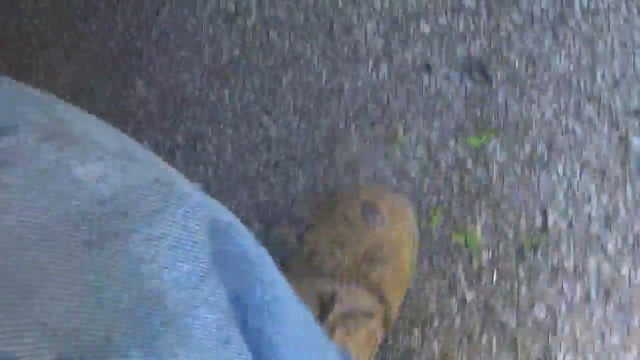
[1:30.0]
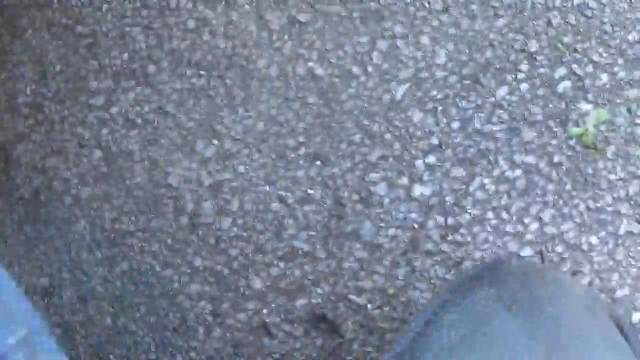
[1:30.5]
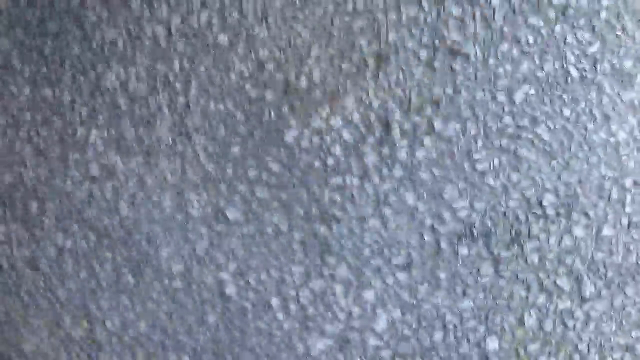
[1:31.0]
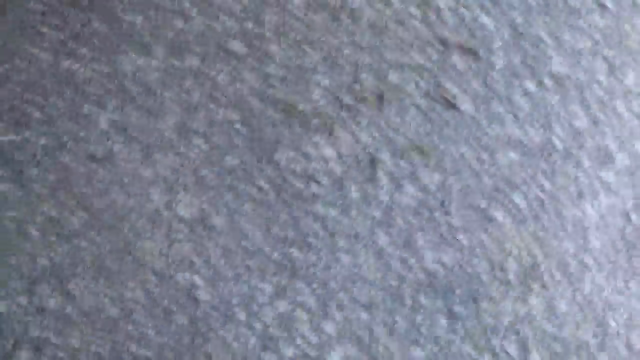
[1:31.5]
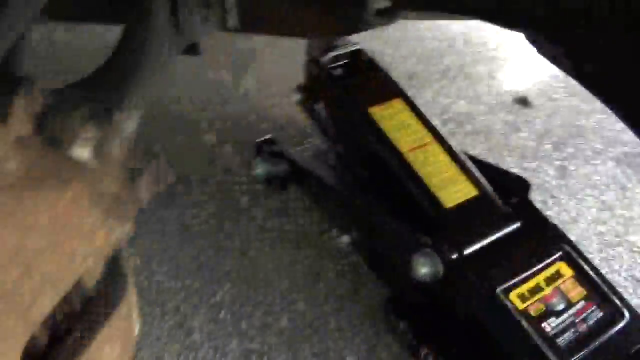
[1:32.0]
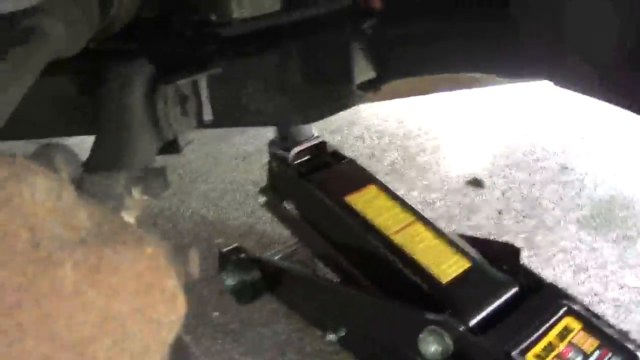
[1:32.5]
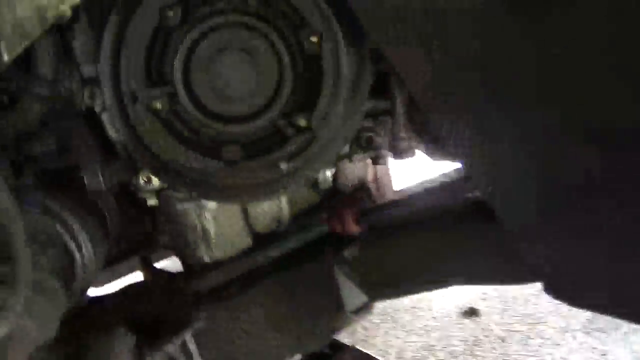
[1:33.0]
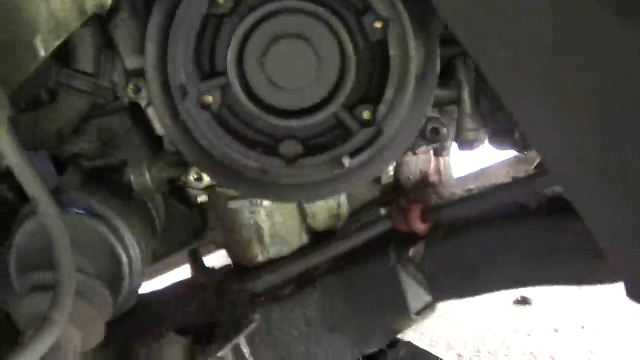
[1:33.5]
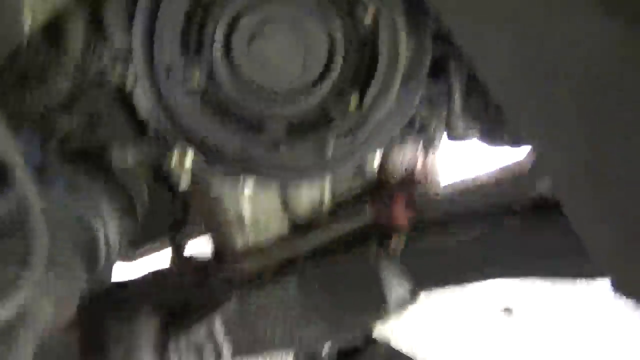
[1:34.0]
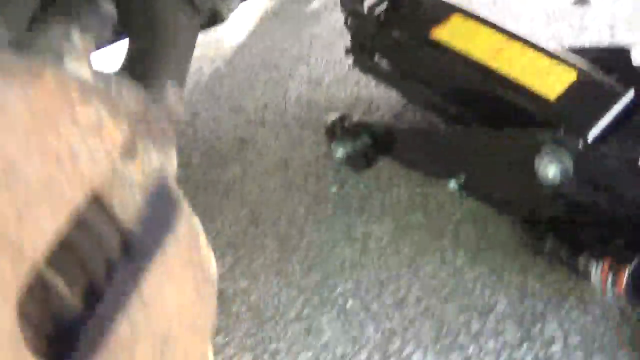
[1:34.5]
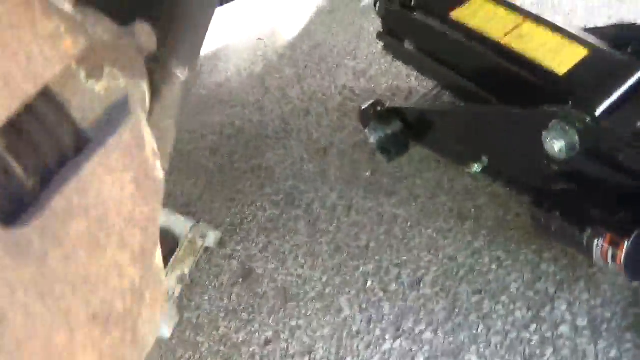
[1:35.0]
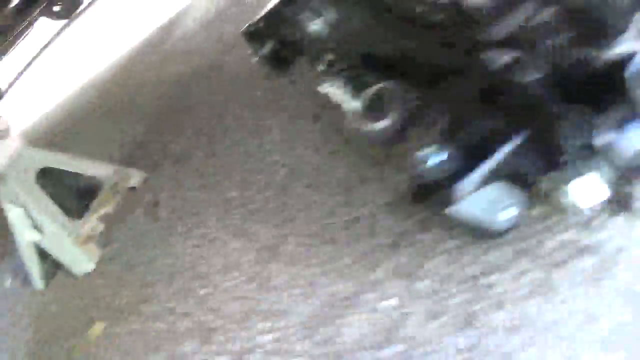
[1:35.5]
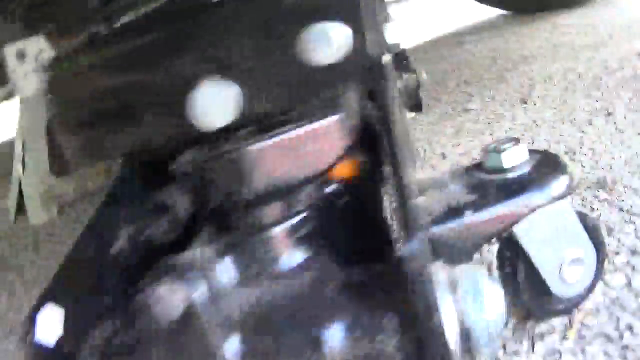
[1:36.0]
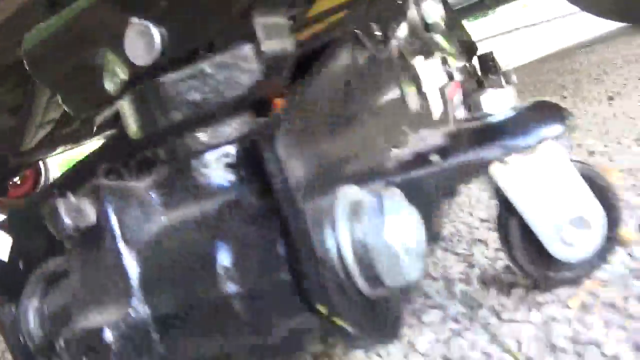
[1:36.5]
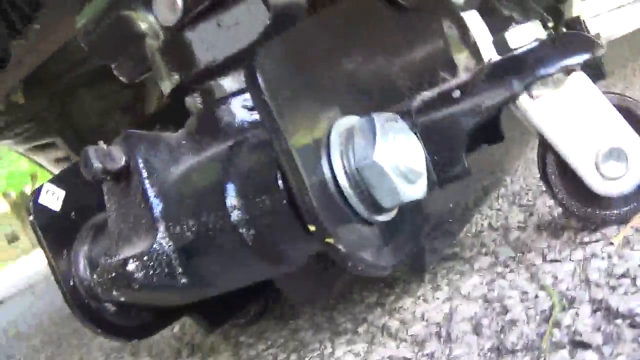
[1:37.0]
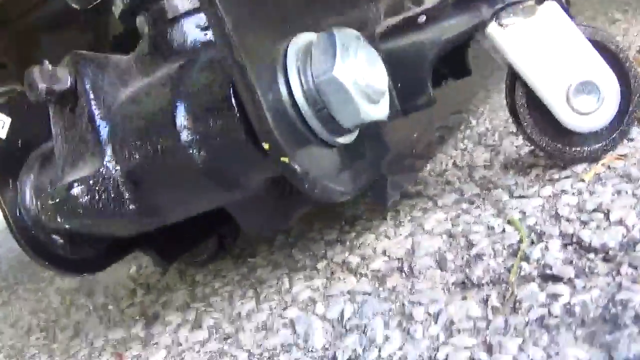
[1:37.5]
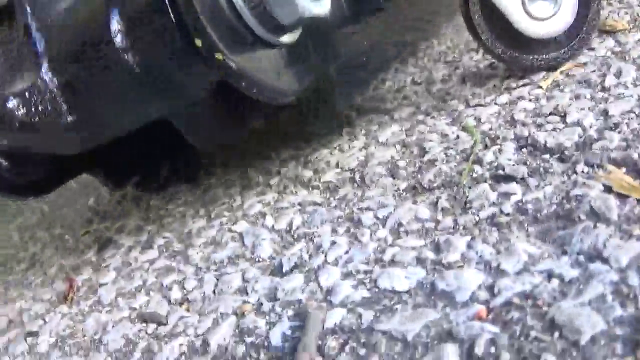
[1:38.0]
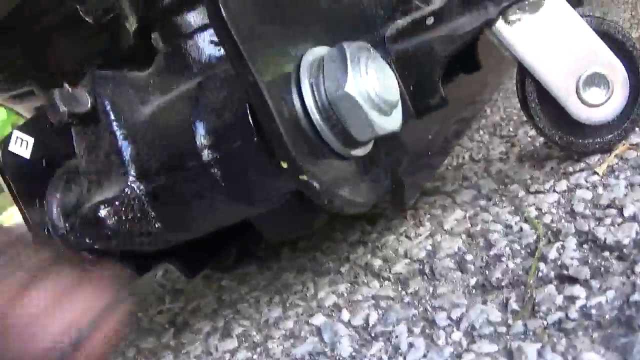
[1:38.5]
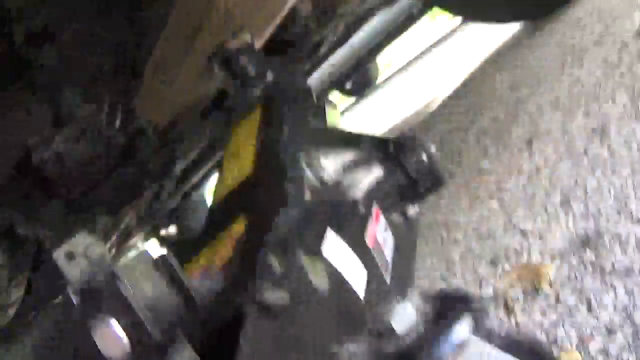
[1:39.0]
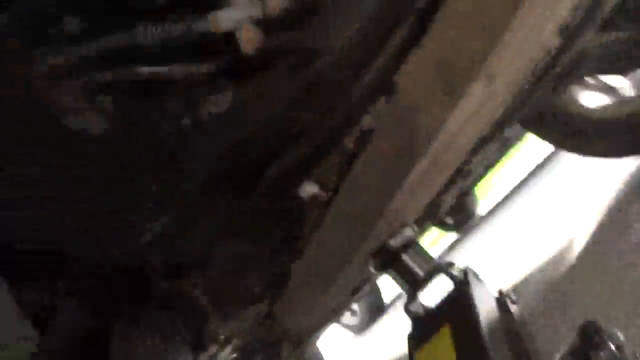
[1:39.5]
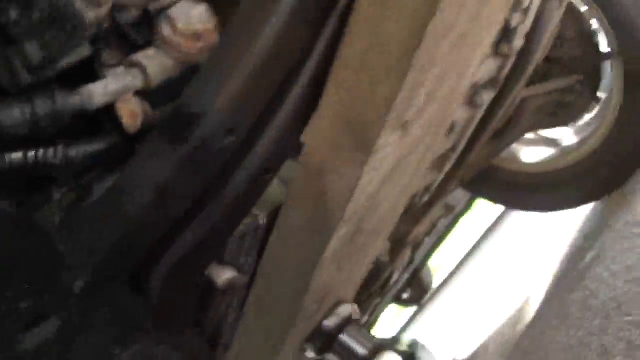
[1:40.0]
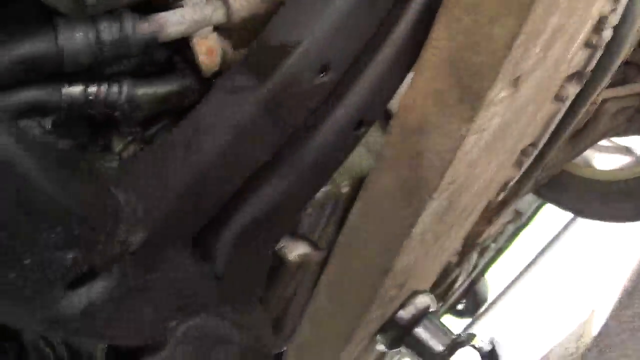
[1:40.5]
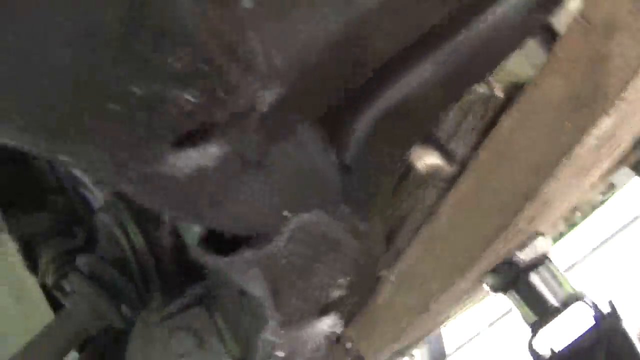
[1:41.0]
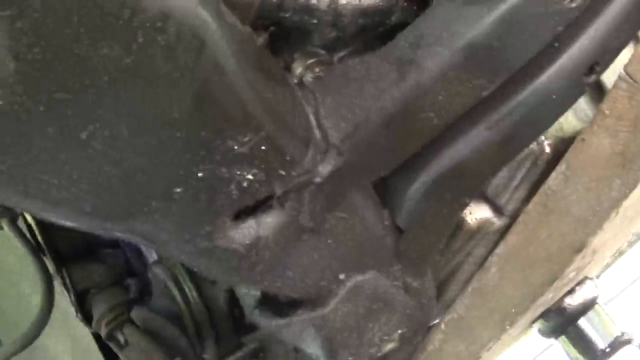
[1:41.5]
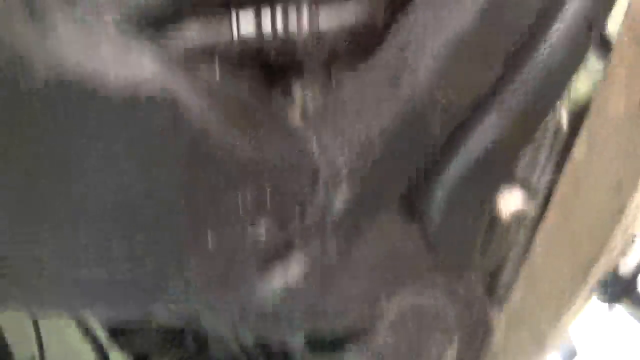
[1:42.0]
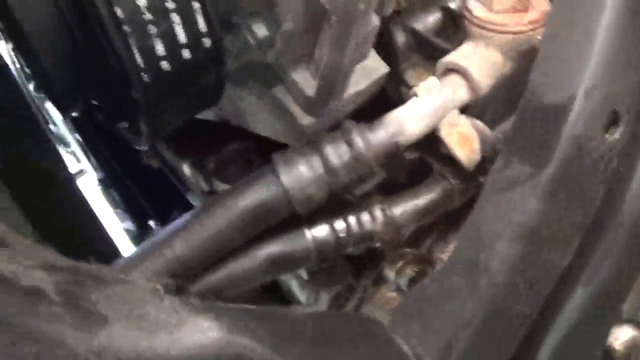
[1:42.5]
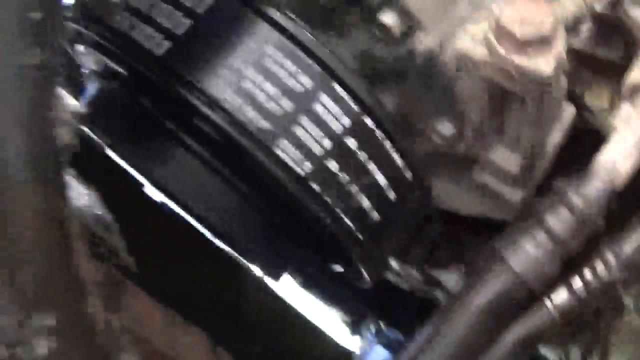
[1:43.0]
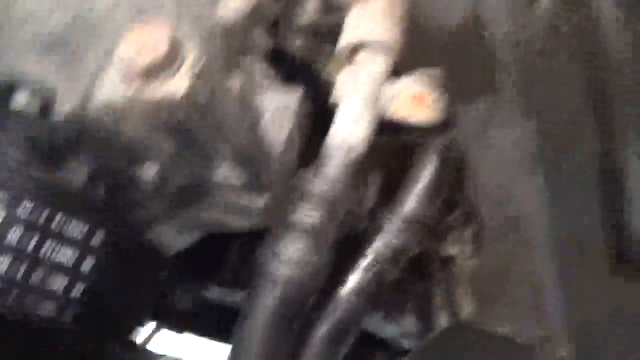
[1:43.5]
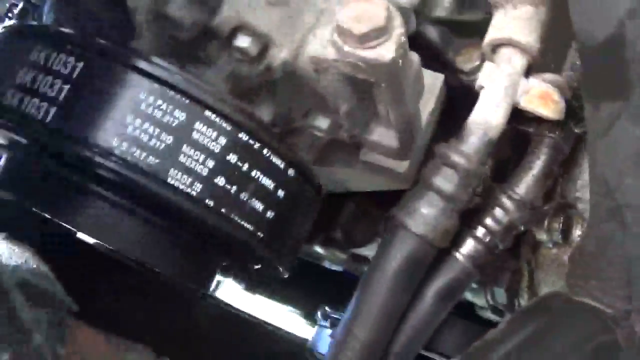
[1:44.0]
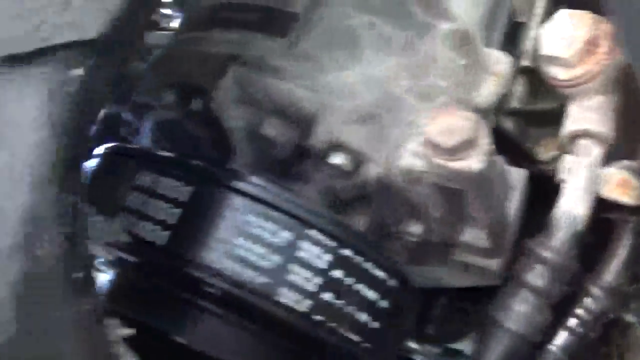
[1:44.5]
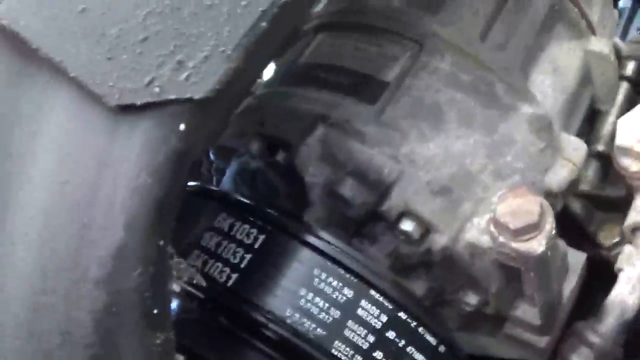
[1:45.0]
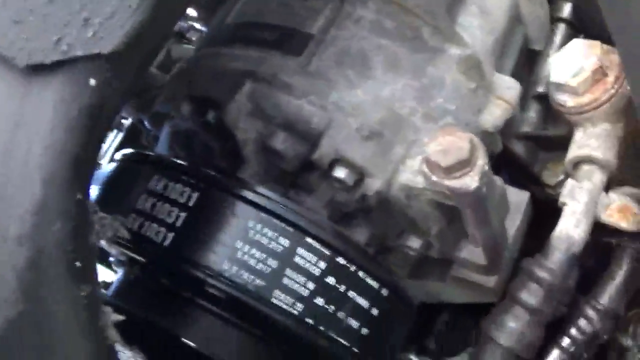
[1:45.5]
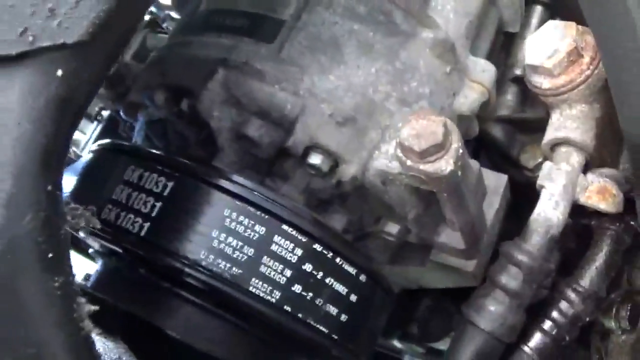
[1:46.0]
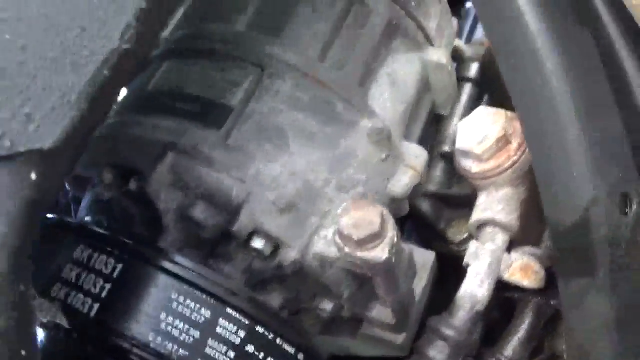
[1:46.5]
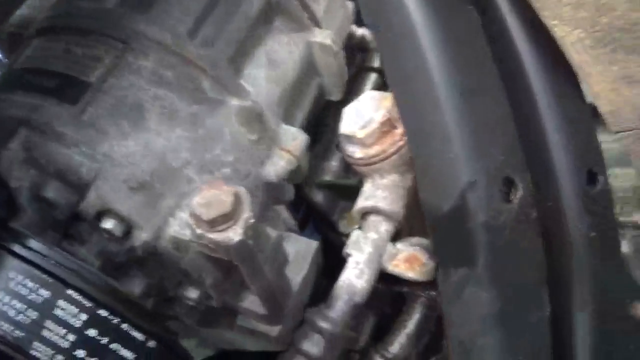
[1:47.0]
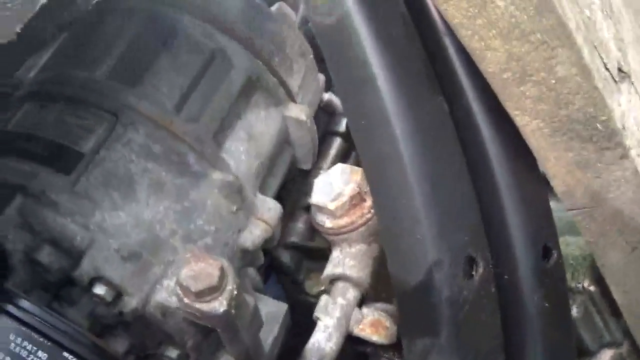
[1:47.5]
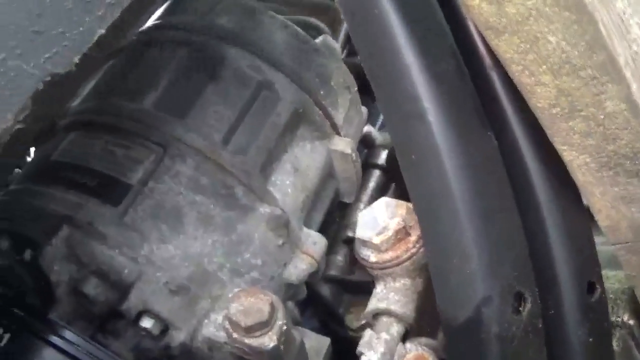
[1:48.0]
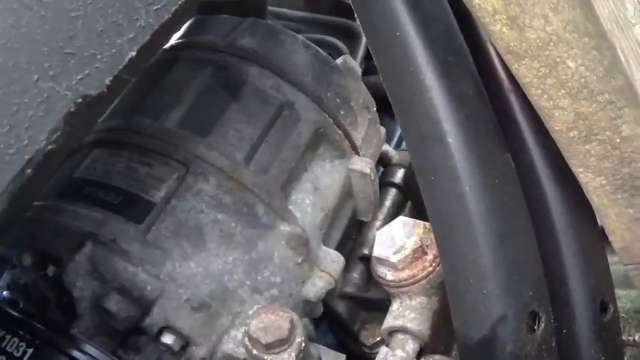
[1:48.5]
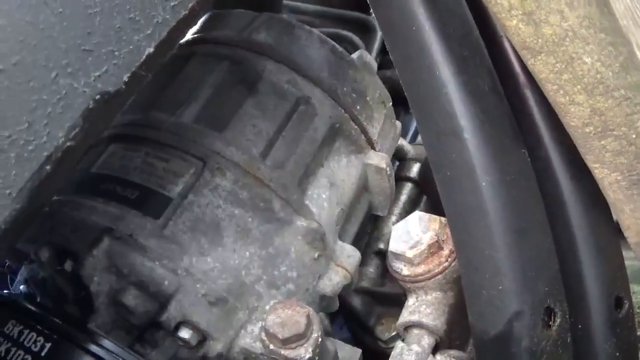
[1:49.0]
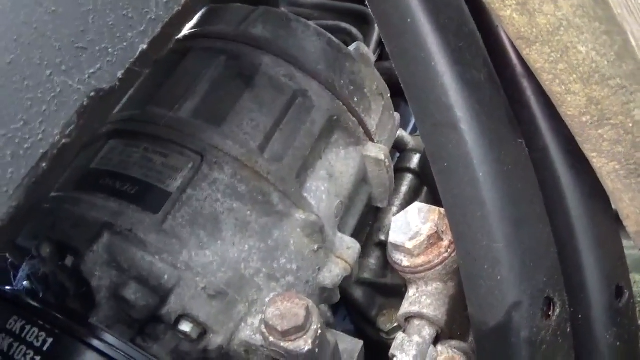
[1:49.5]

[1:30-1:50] The camera faces the ground, partially showing the individual's work boots and light blue jeans. The camera passes by a floor jack, so the vehicle is jacked up in the air off the ground. It is then pointed under the vehicle, looking up through the engine, centered on some kind of motor with a belt driveshaft.